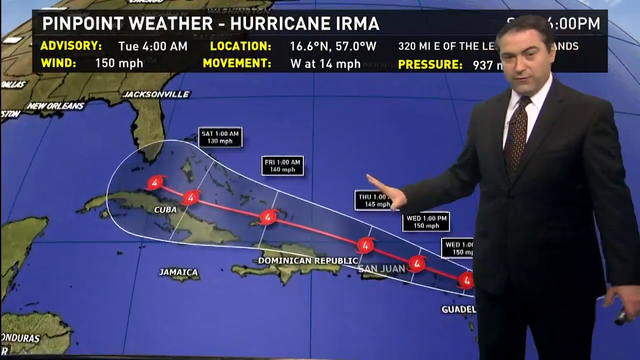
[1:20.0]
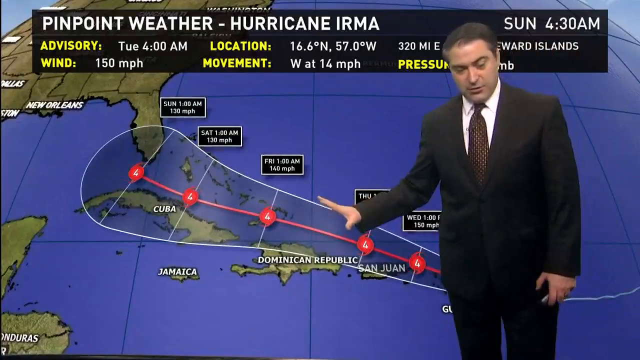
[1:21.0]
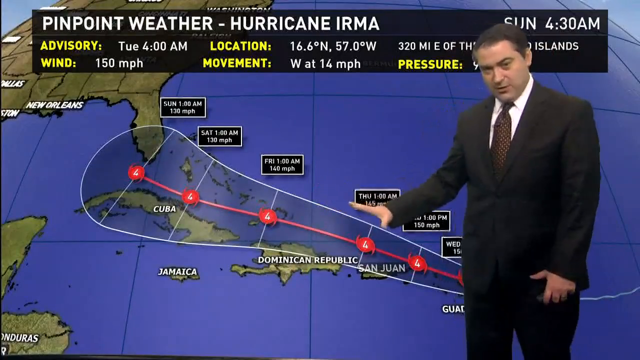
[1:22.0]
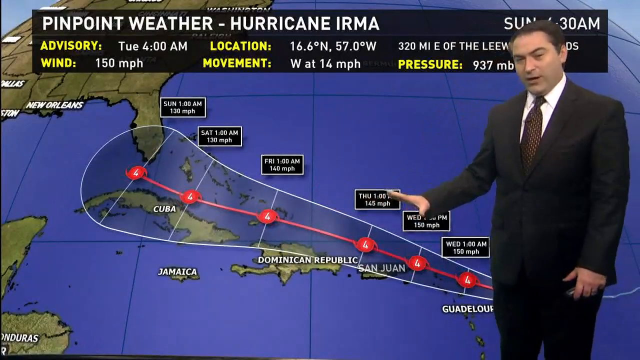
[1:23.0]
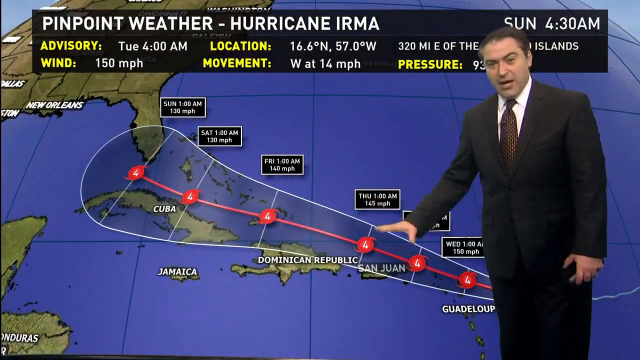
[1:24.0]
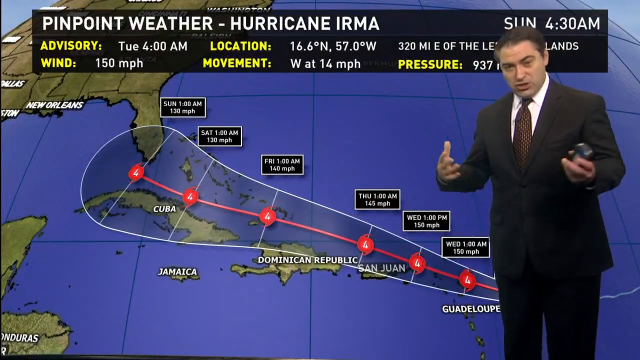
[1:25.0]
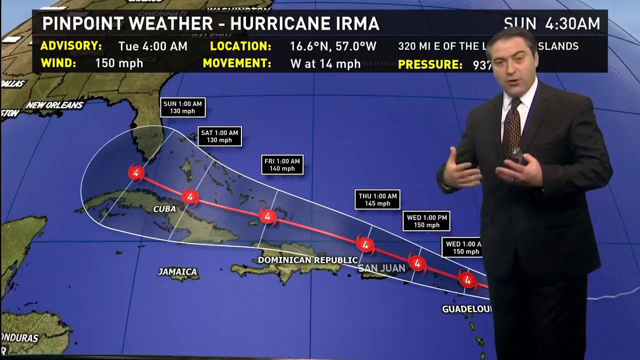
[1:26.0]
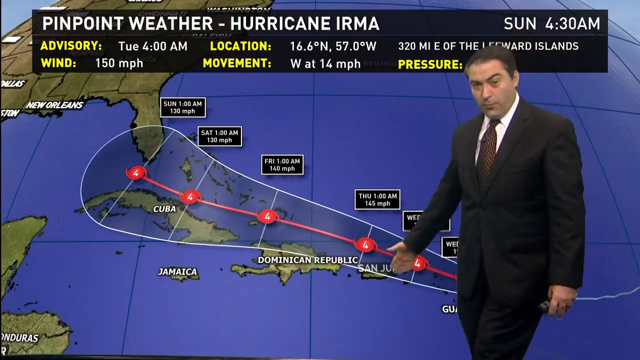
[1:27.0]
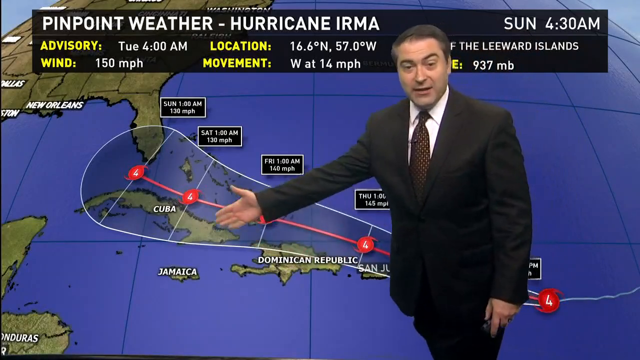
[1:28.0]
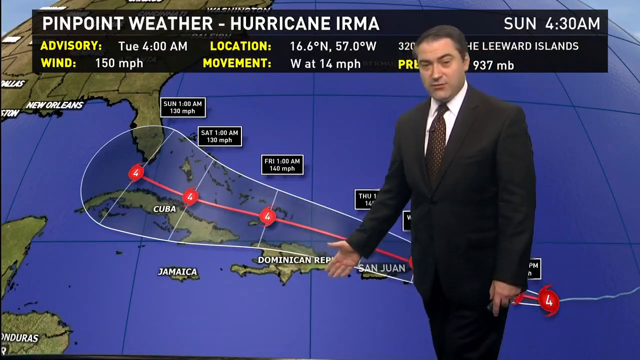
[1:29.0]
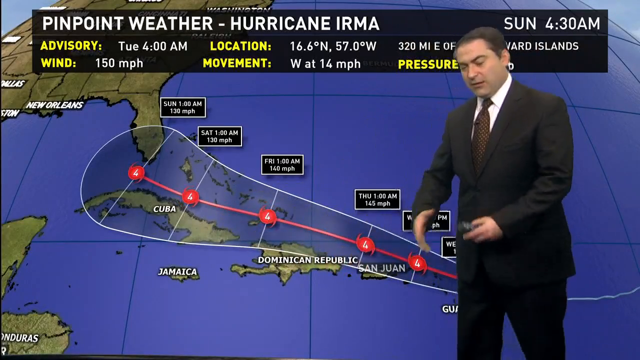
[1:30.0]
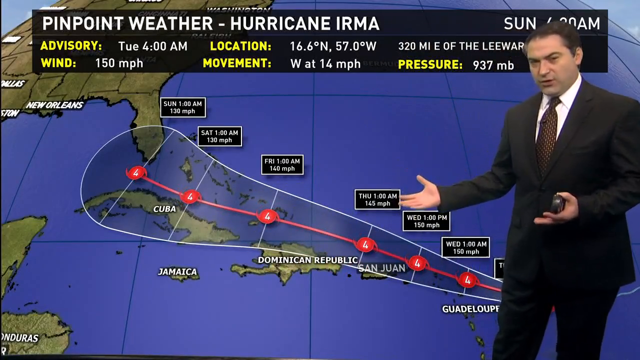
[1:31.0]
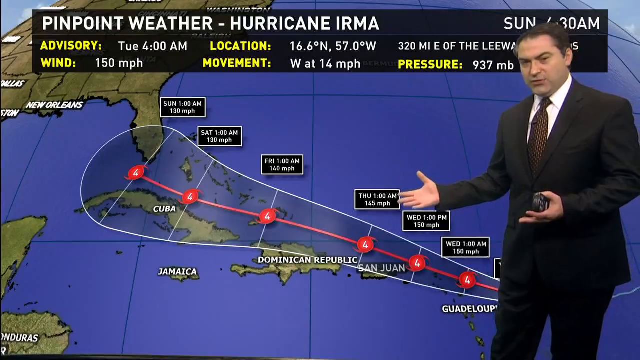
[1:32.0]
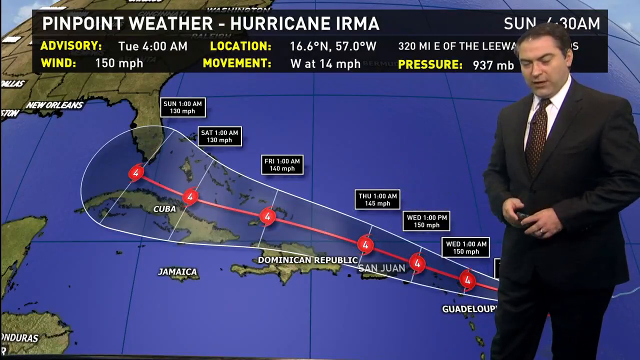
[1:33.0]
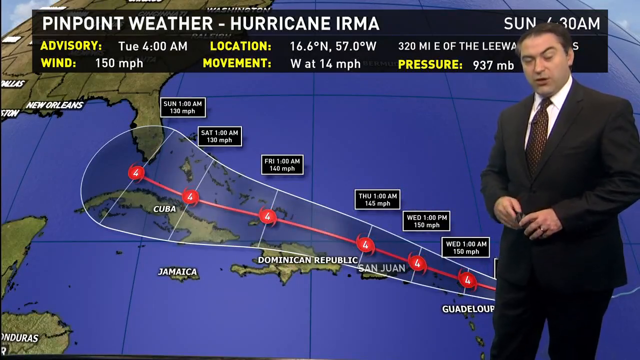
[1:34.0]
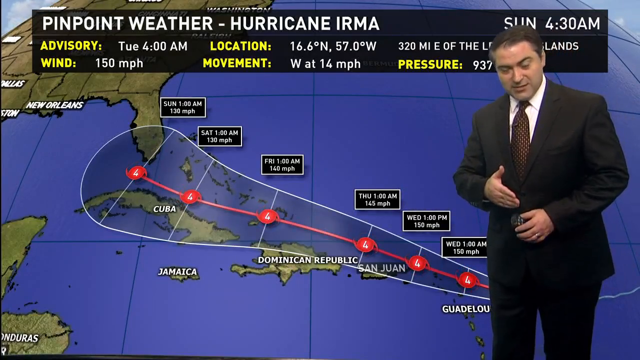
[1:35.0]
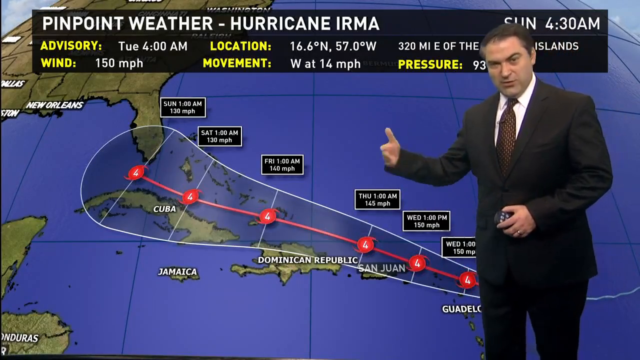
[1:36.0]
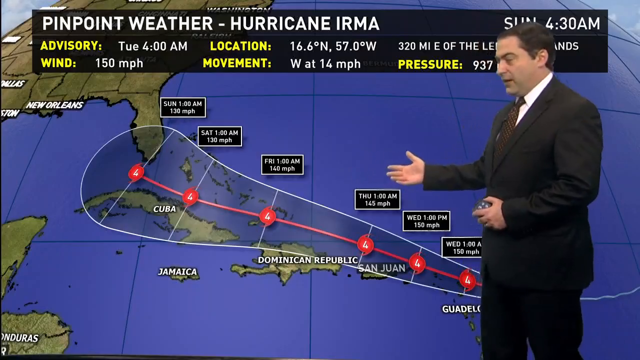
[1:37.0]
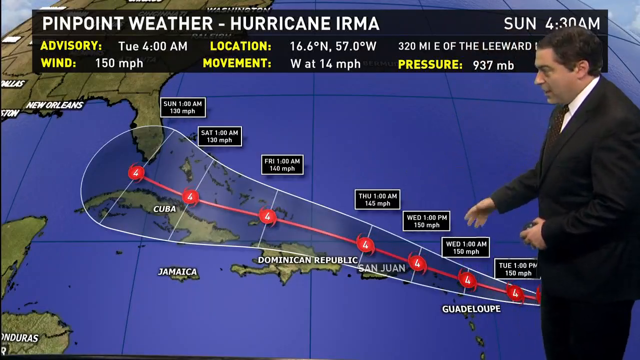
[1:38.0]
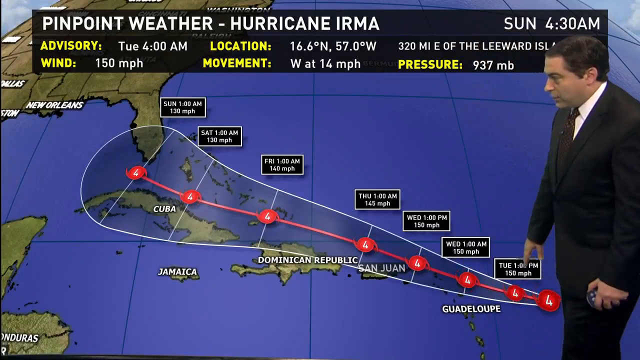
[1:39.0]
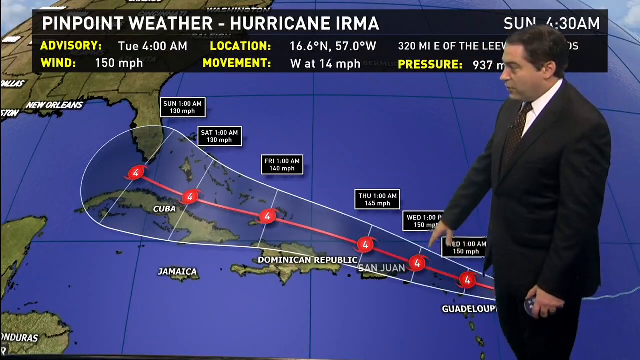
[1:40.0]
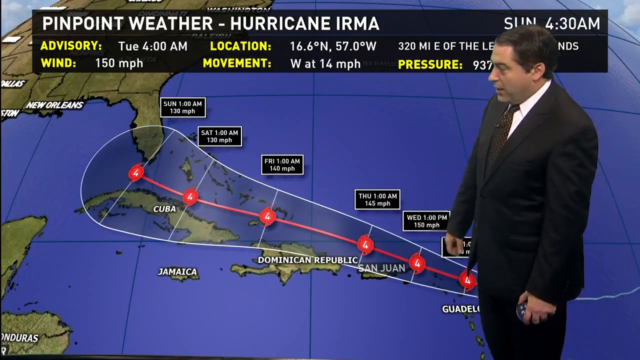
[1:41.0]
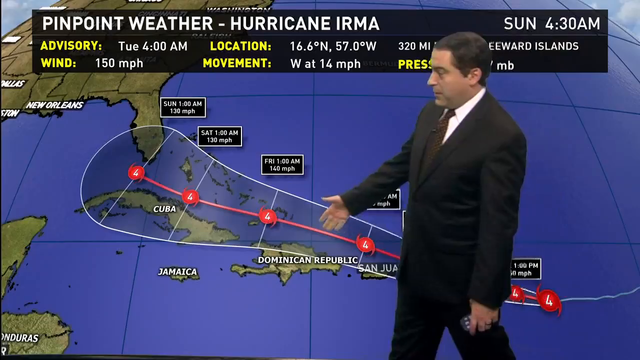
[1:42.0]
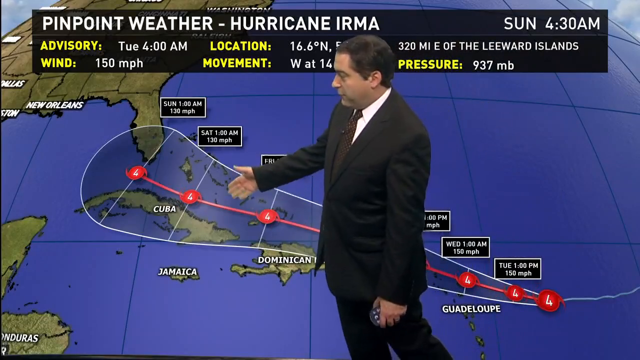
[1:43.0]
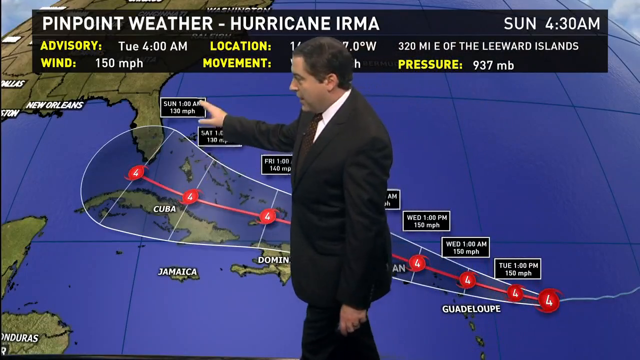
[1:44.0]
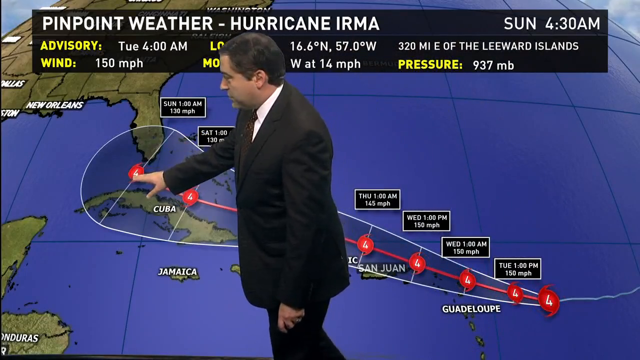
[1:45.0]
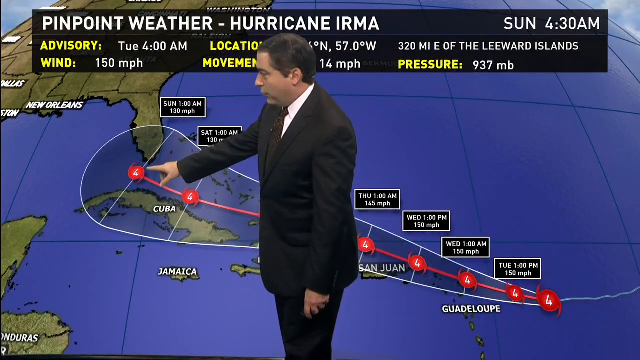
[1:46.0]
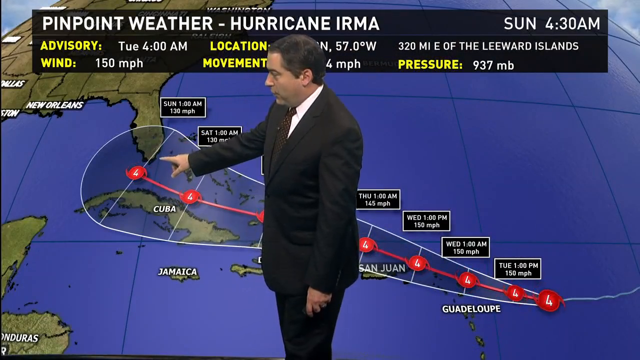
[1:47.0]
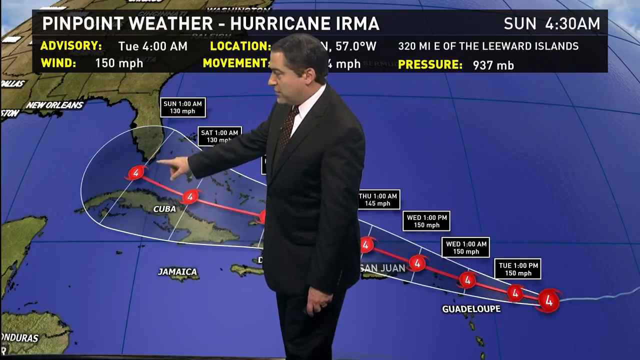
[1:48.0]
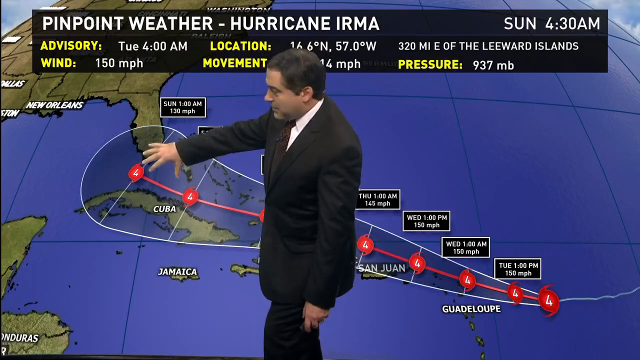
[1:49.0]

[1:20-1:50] The weatherman, wearing a black suit, burgundy tie and white shirt, gestures towards the Hurricane Irma weather map behind him. The map now shows the different categories the hurricane will be on different days and times. The hurricane seems to go right over the Caribbean islands, just to the north of them, at Category 4, while heading straight towards the Gulf of Mexico. Because his arm is above the line on the map, he sort of points down with his right hand to show the line, then uses a sweeping movement to show the path. He steps back towards the right side of the screen and talks with his hand while looking at the camera. He then turns his right side towards the screen again and walks through the different stages of the hurricane at different times, ending with a sweeping movement of his arm up the gulf side of Florida.